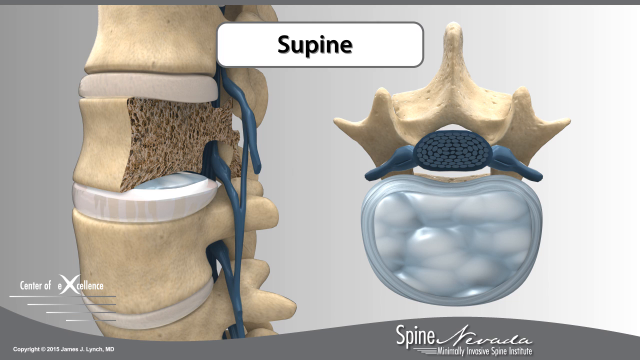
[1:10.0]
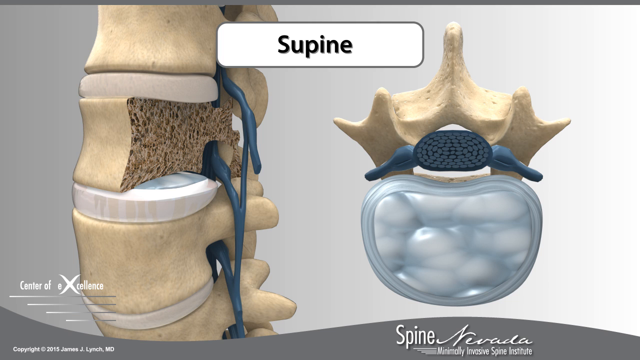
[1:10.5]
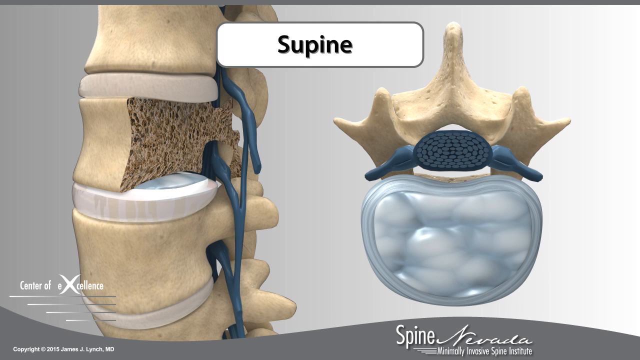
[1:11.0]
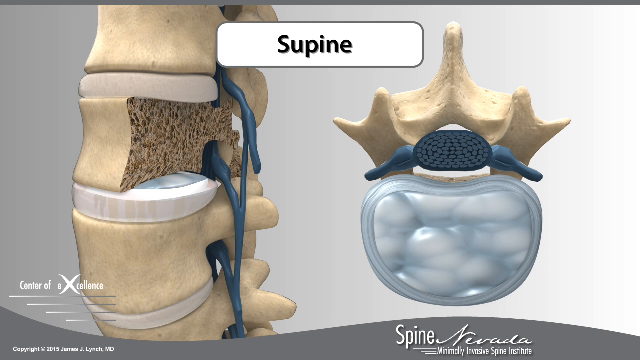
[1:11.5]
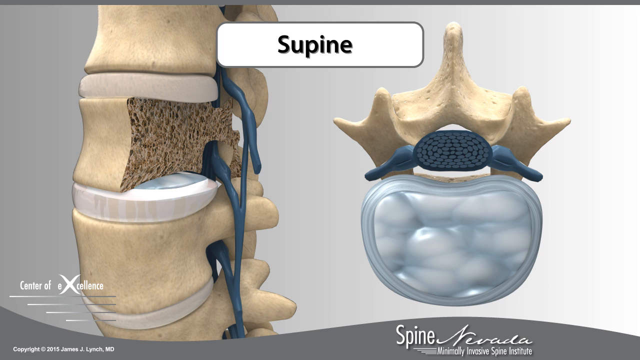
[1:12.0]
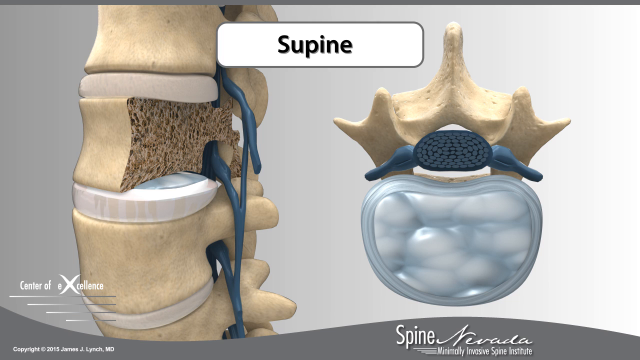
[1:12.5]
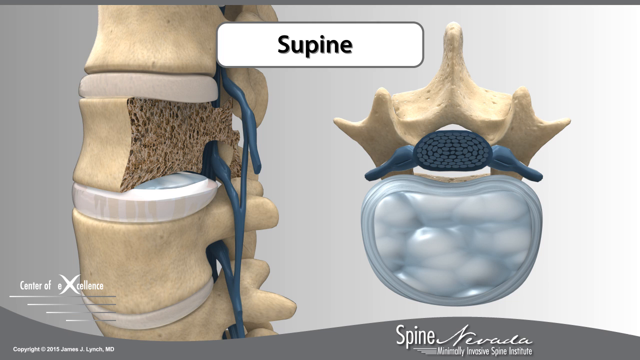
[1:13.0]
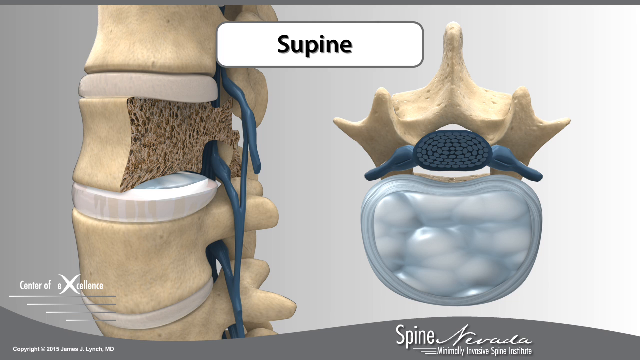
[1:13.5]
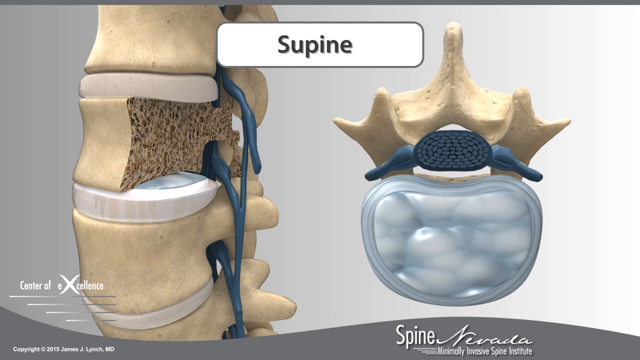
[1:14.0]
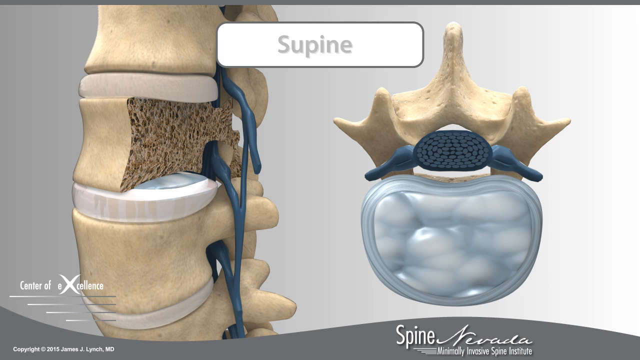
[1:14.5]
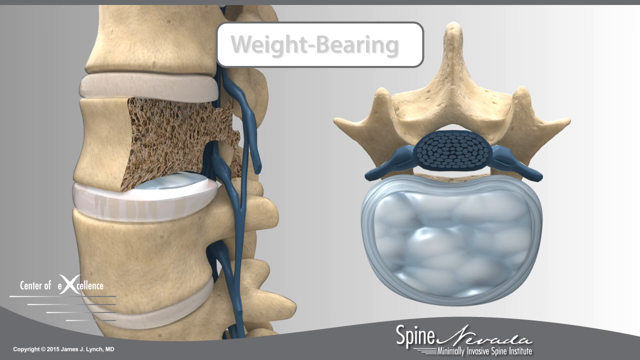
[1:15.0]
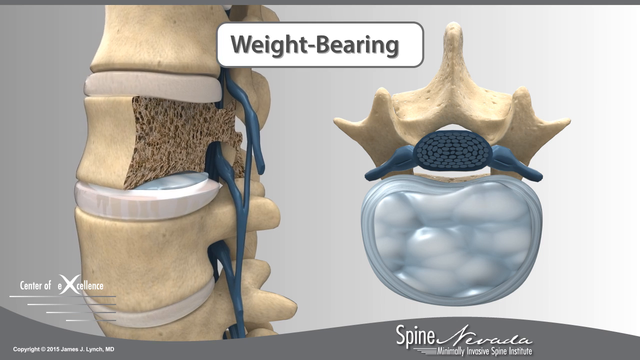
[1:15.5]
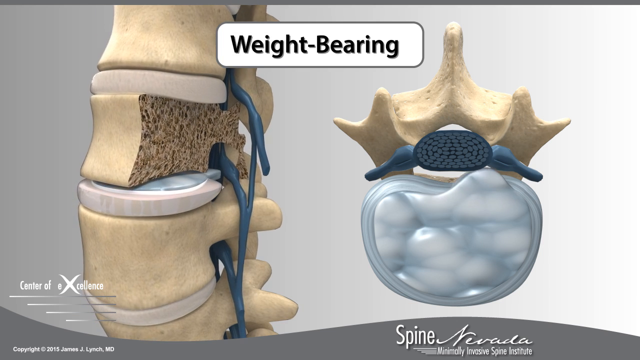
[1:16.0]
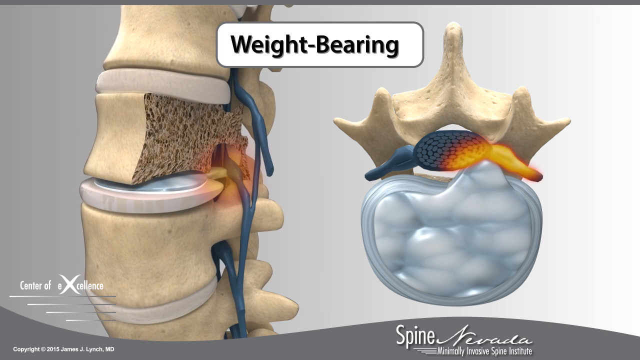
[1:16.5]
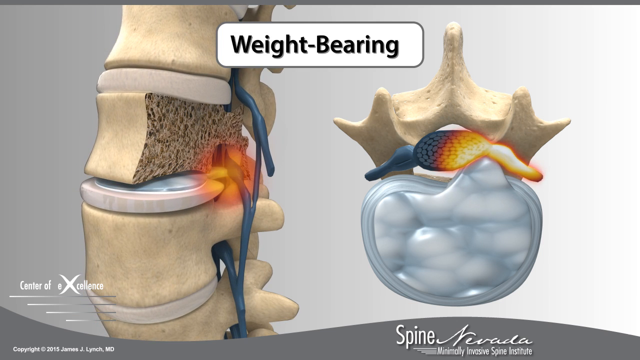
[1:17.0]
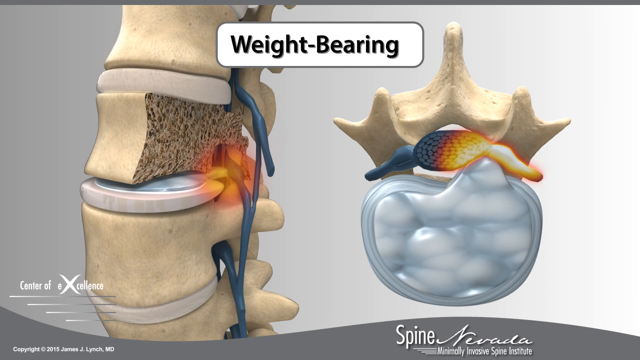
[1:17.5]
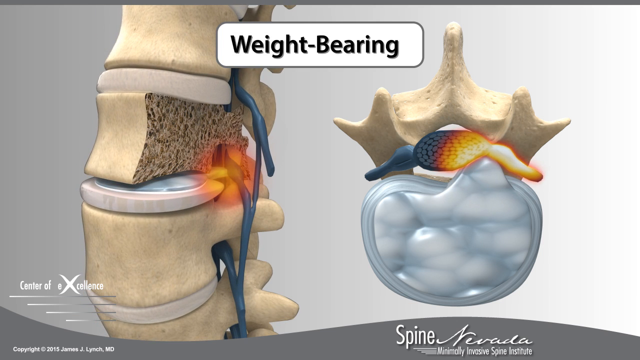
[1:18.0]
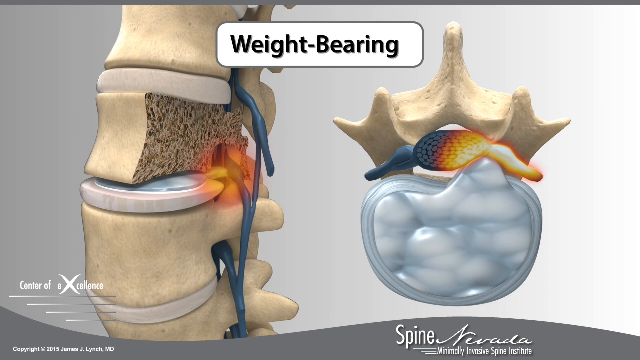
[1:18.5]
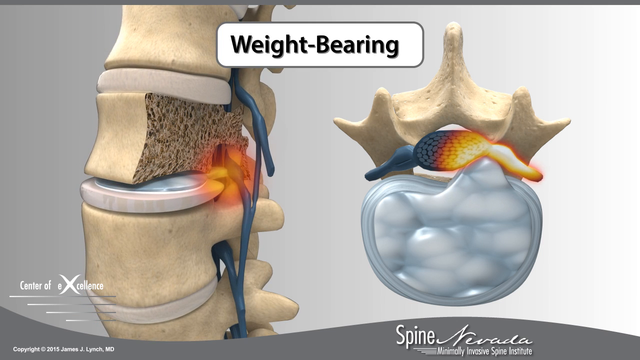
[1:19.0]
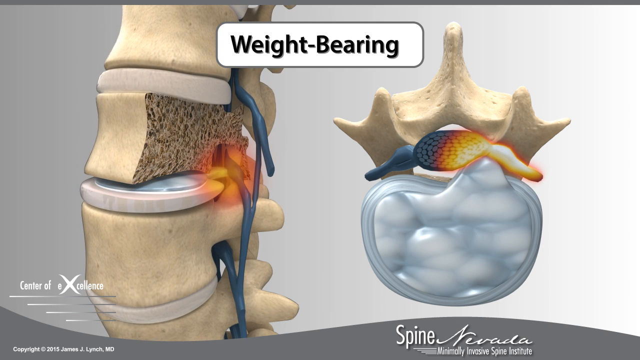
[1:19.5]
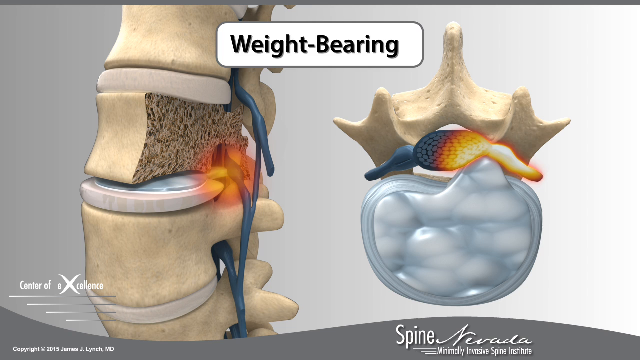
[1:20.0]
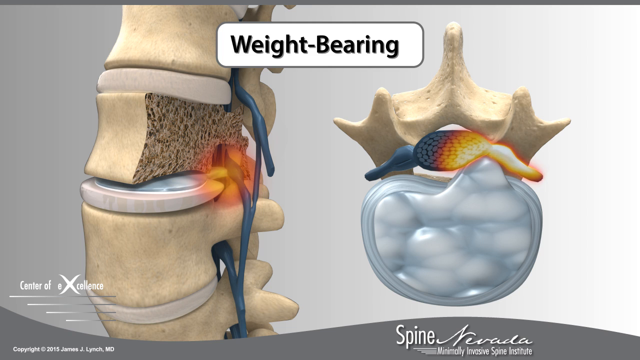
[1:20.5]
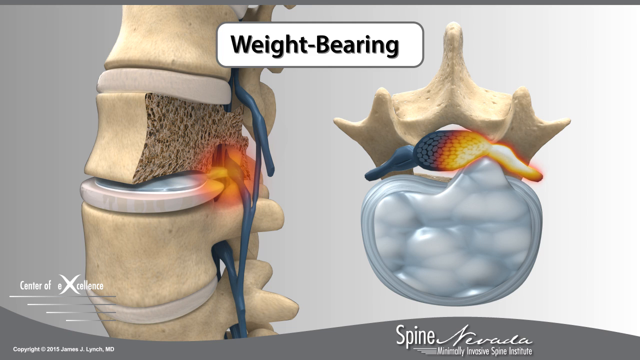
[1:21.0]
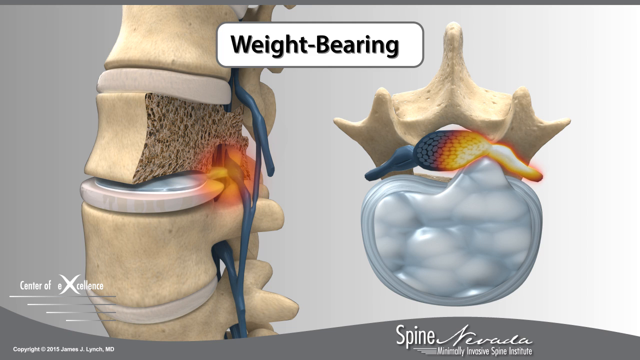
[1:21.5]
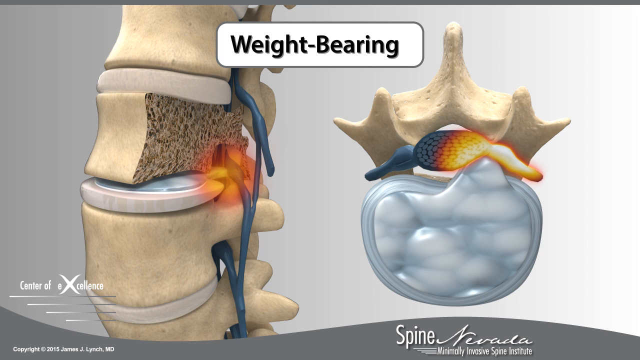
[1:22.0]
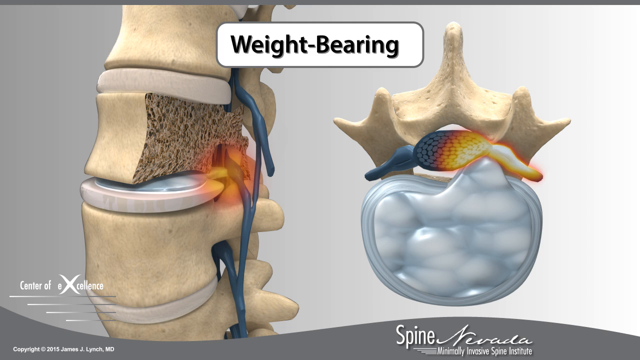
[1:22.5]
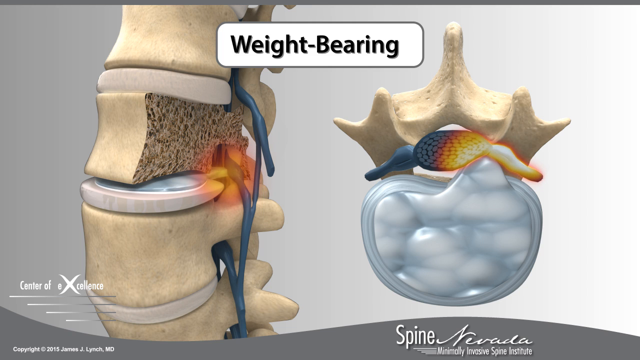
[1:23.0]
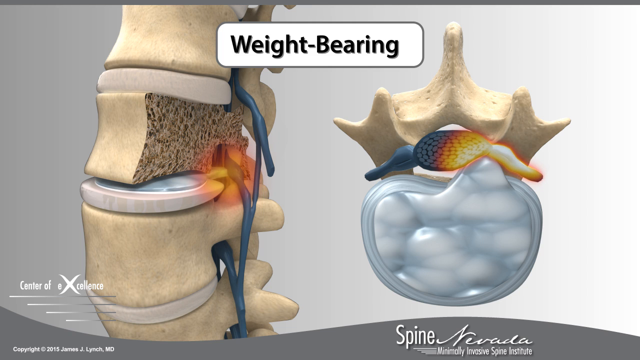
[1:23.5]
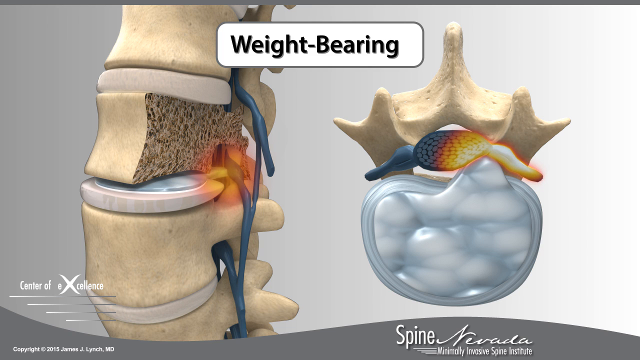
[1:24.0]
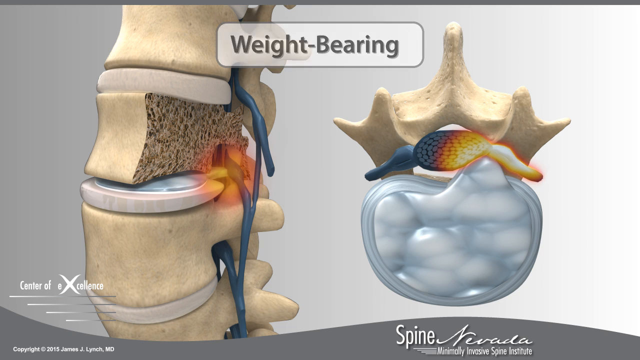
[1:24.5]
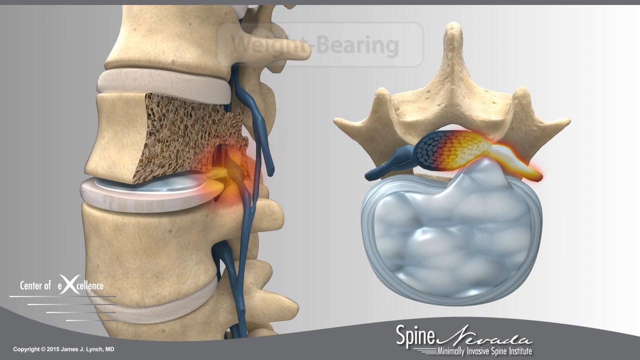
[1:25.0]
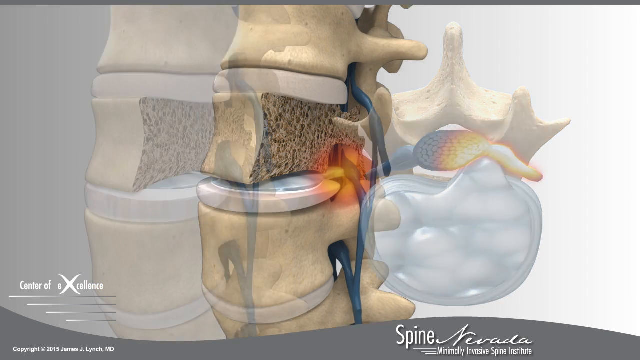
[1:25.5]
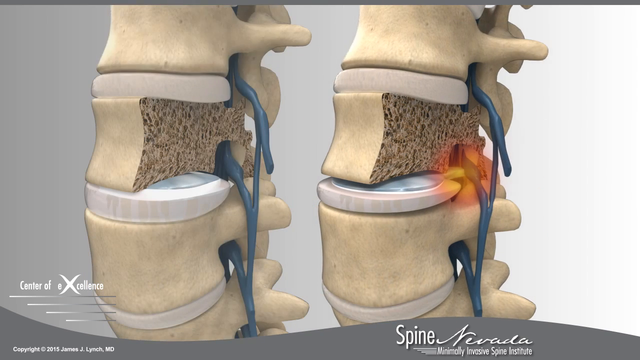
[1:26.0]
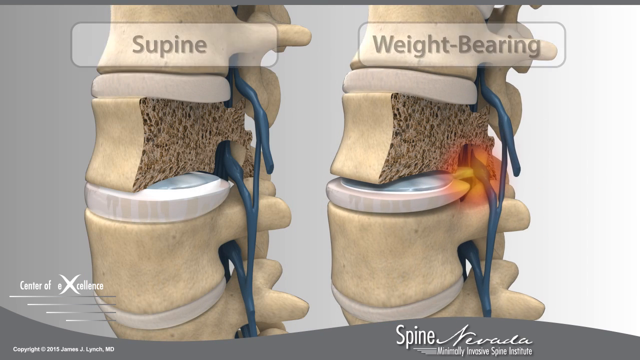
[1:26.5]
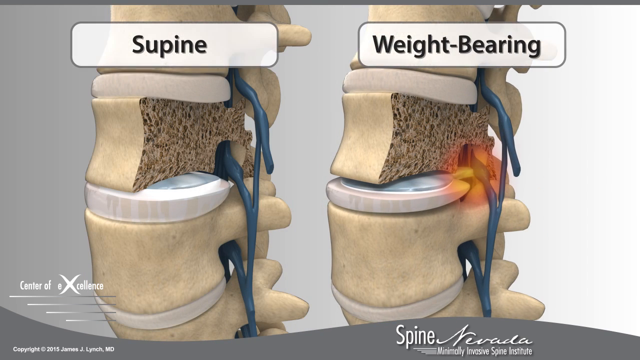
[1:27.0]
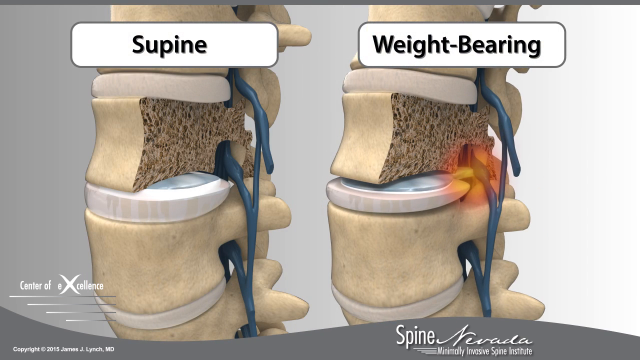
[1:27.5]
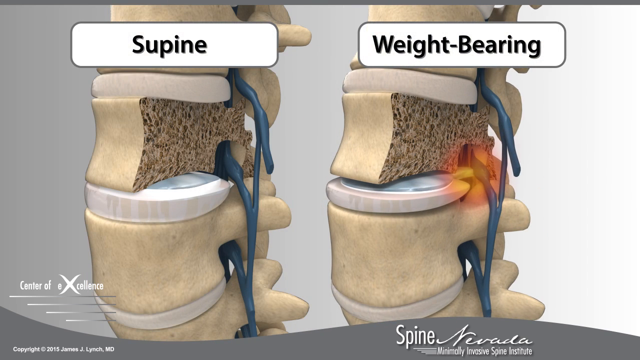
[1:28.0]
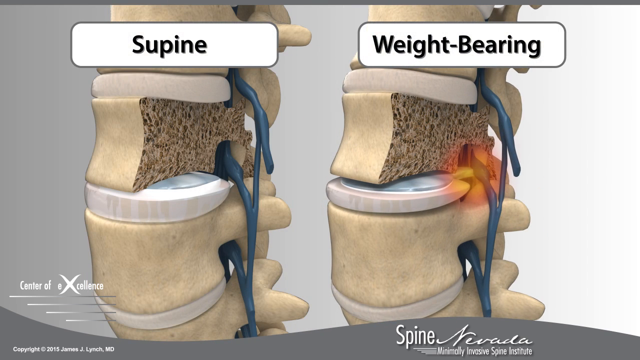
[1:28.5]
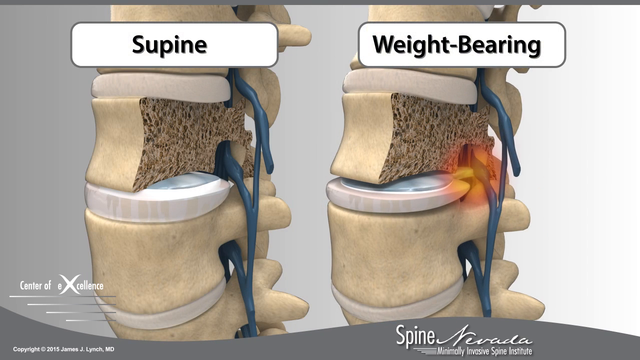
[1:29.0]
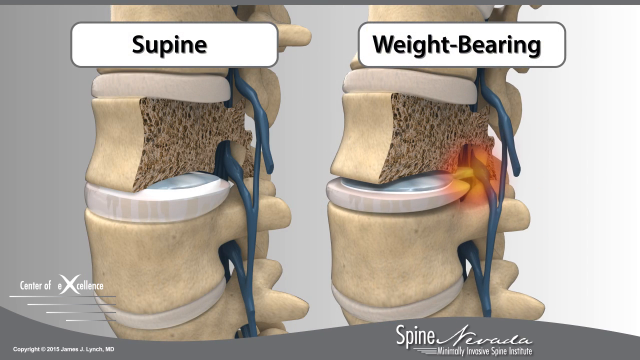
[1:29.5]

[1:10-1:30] The white label at the top of the screen changes from "supine" to "weight-bearing", and as it changes, the spine model on the left side moves forward to the right a little. Red areas appear in both models, the cross-section on the right and the model on the left, probably indicating nerve impingement during weight-bearing. The model on the left then moves to the right side, and on the left side a faded model appears and colors in. Two models are now shown: the left one labeled "supine" and the right one labeled "weight-bearing". The right one leans to the right a little, while in the left model the vertebrae are all completely connected, and there is a red mark indicating some impingement.